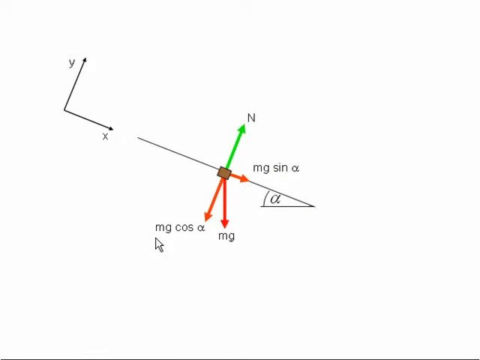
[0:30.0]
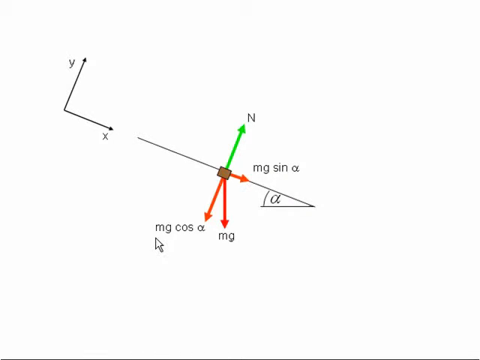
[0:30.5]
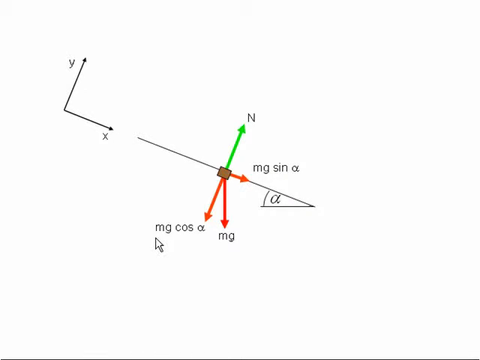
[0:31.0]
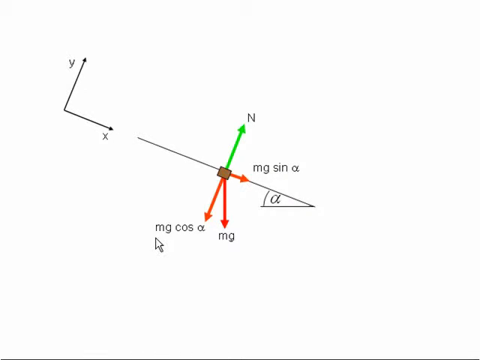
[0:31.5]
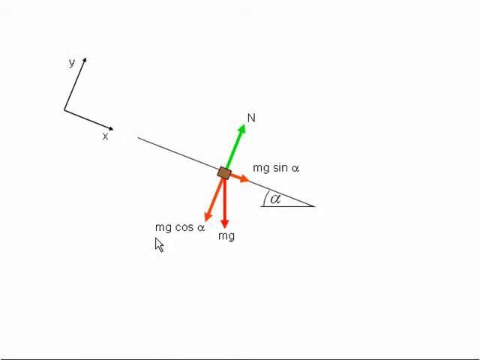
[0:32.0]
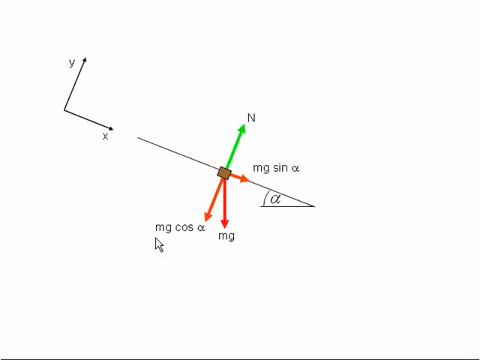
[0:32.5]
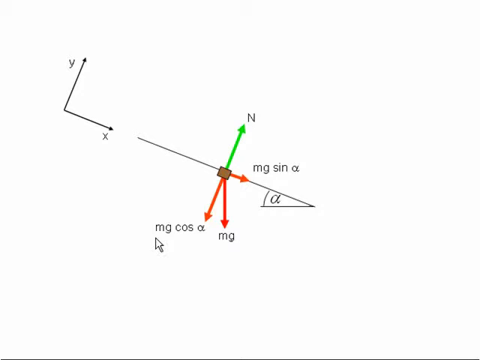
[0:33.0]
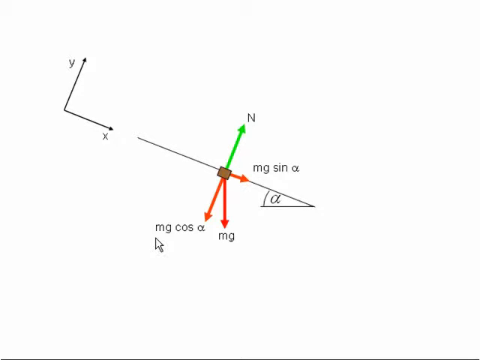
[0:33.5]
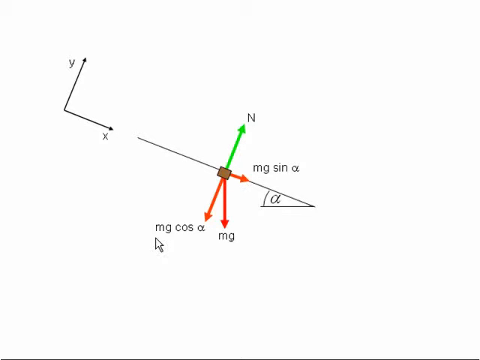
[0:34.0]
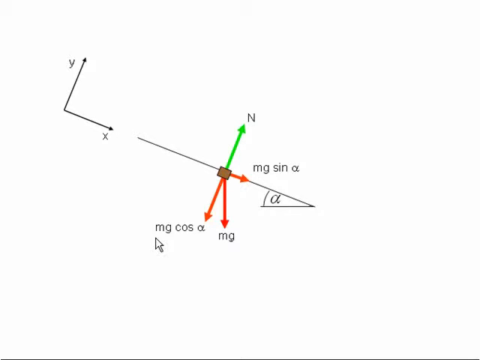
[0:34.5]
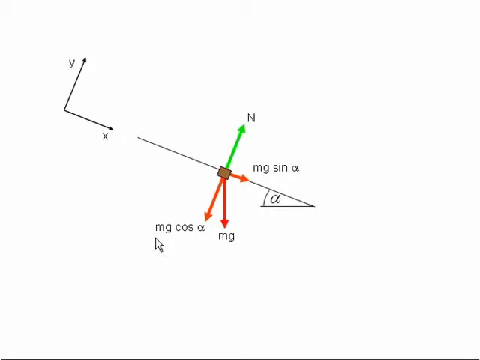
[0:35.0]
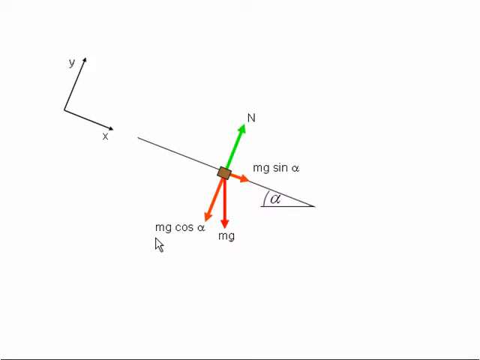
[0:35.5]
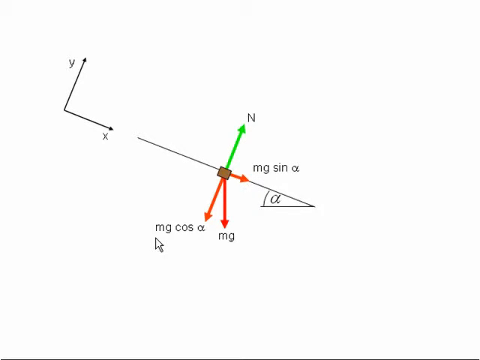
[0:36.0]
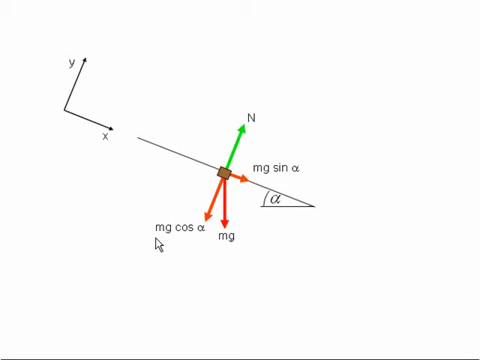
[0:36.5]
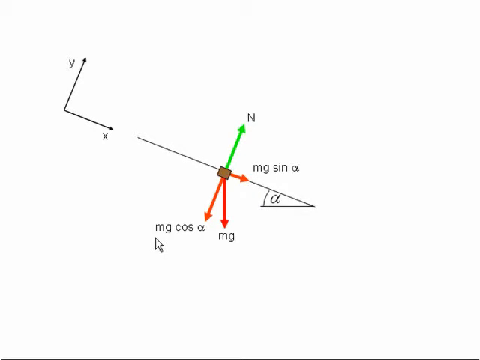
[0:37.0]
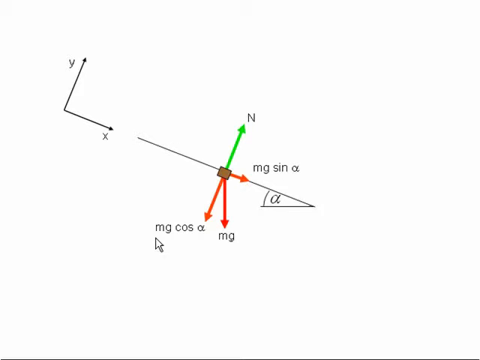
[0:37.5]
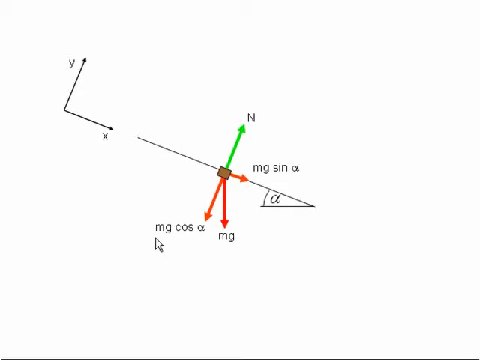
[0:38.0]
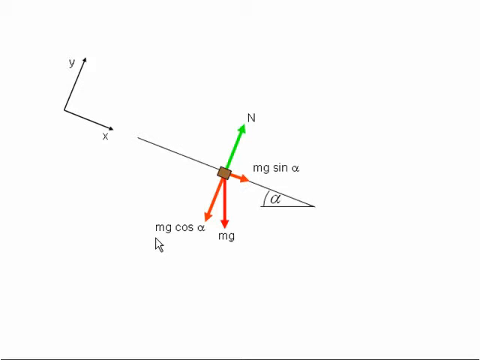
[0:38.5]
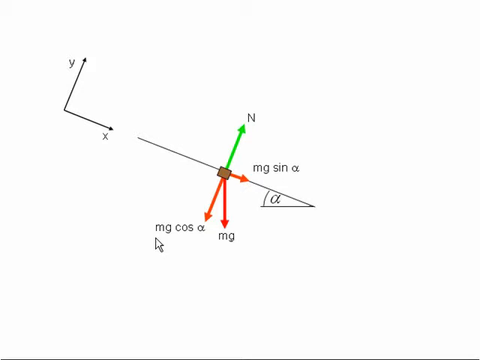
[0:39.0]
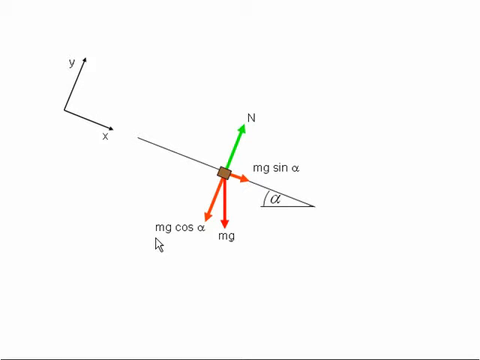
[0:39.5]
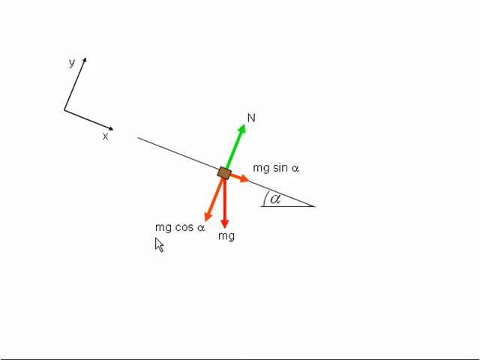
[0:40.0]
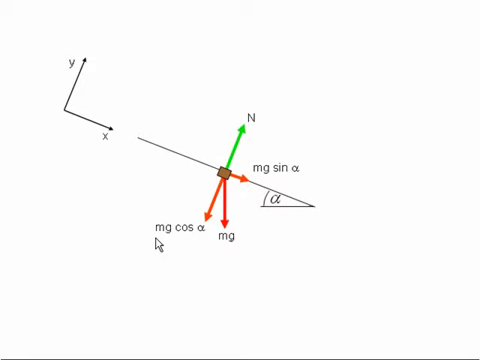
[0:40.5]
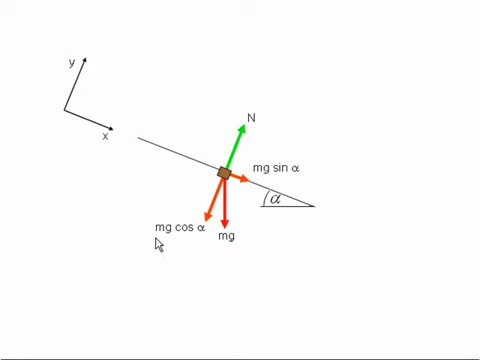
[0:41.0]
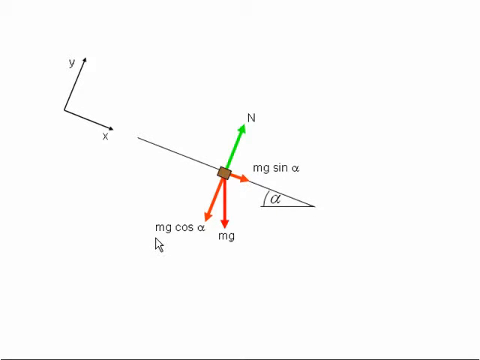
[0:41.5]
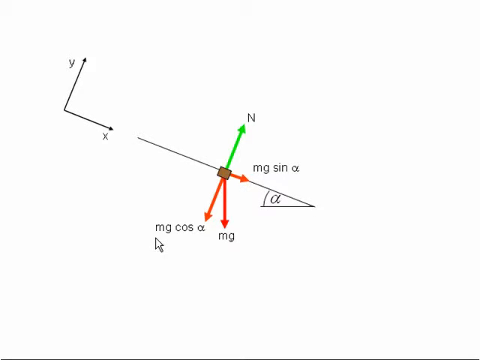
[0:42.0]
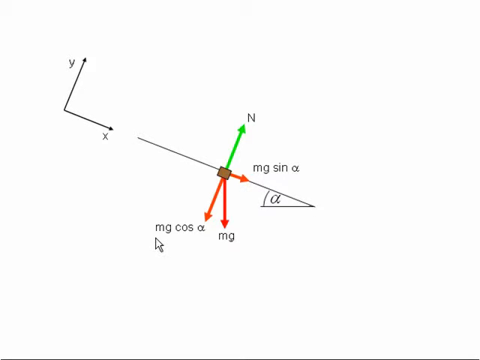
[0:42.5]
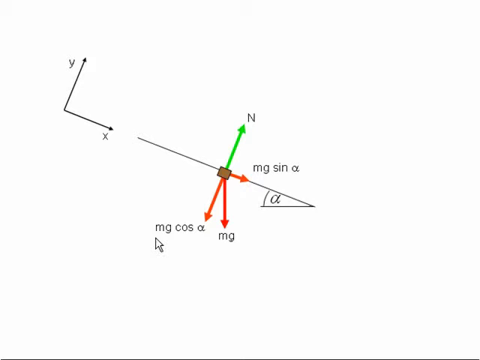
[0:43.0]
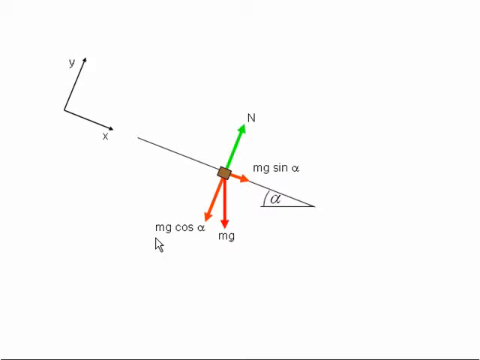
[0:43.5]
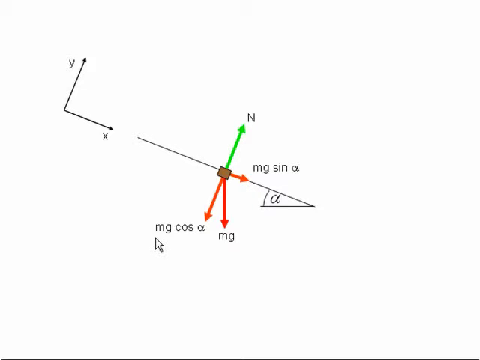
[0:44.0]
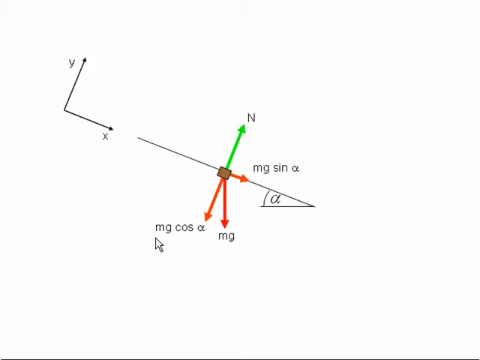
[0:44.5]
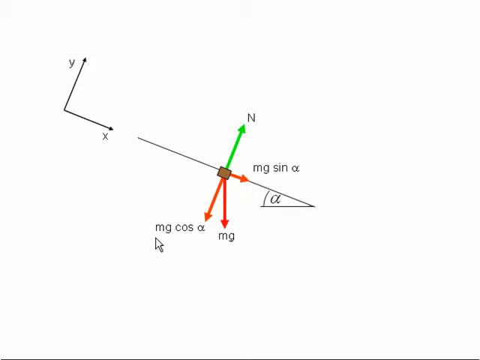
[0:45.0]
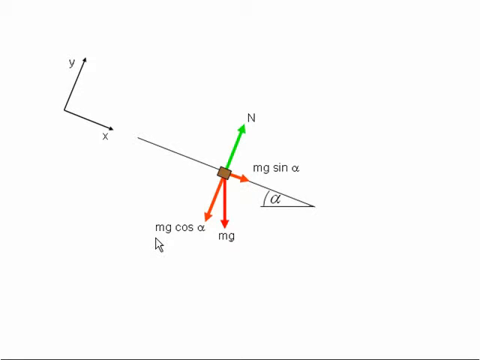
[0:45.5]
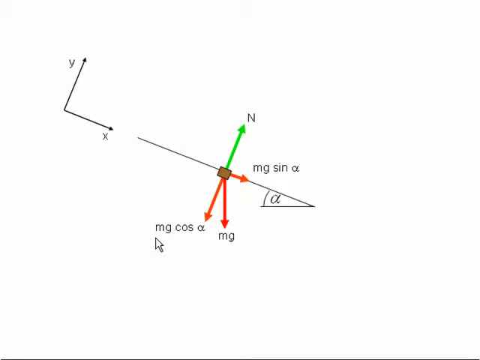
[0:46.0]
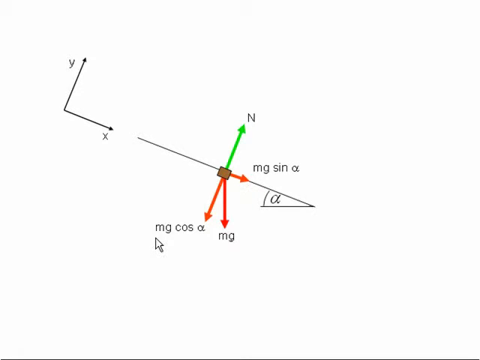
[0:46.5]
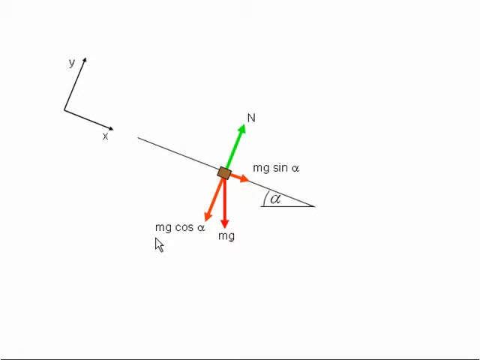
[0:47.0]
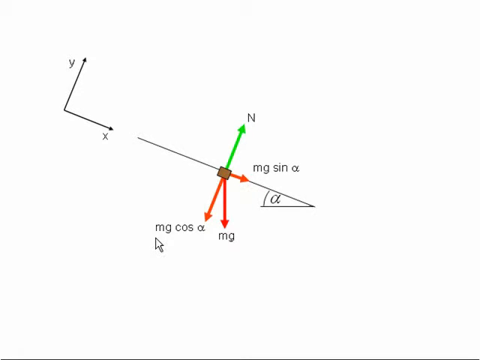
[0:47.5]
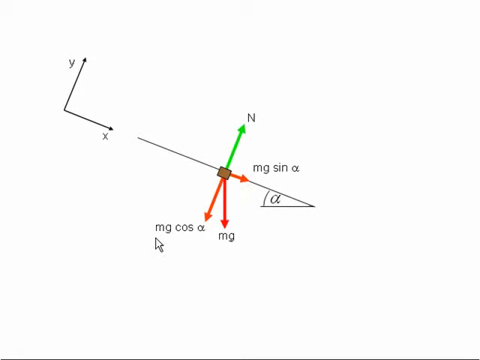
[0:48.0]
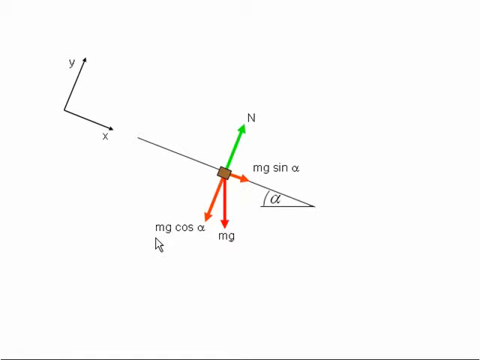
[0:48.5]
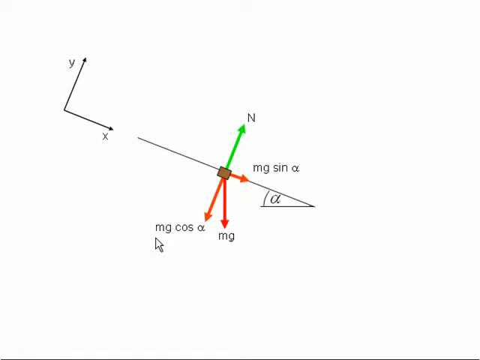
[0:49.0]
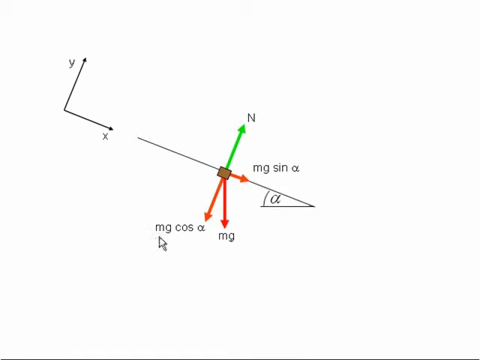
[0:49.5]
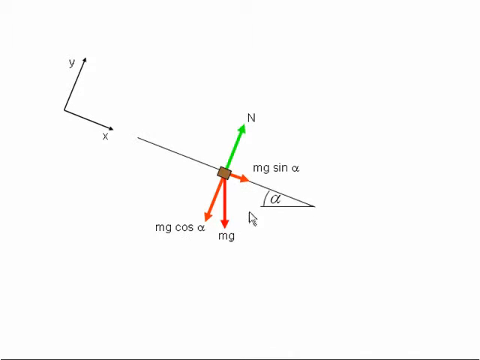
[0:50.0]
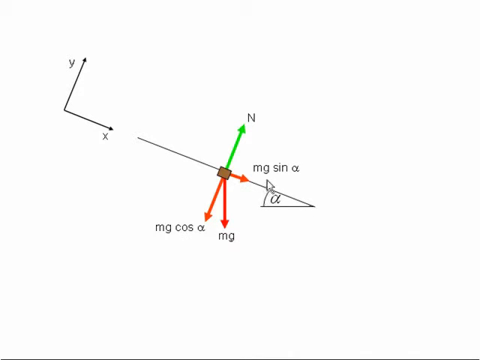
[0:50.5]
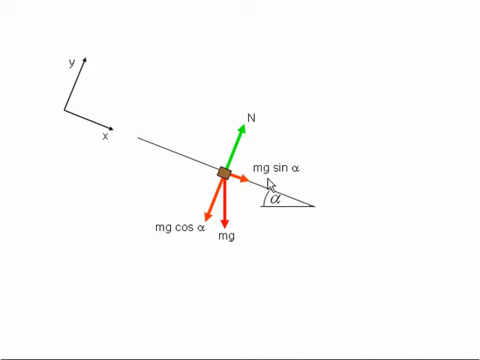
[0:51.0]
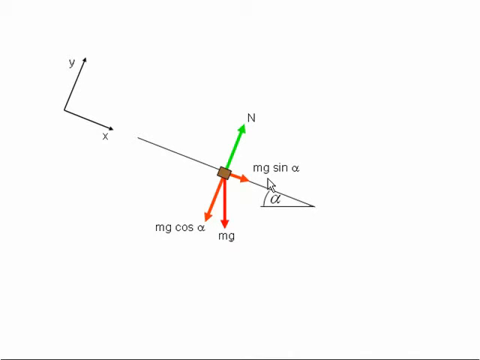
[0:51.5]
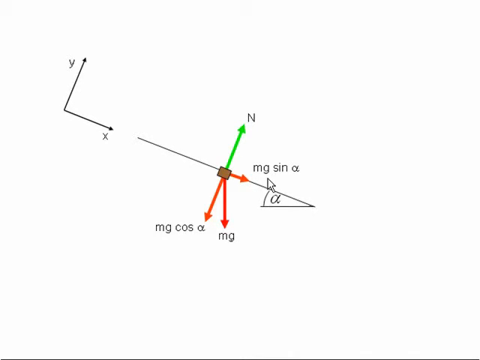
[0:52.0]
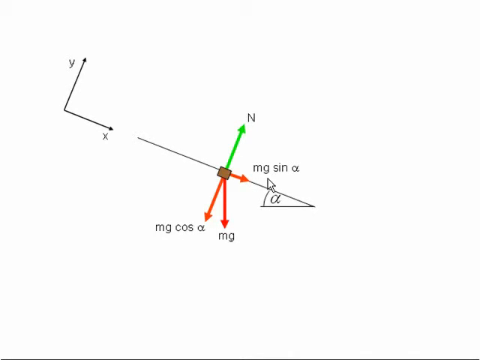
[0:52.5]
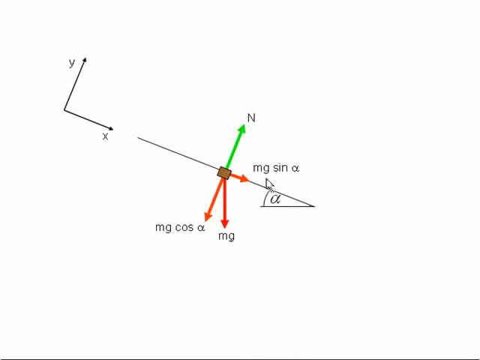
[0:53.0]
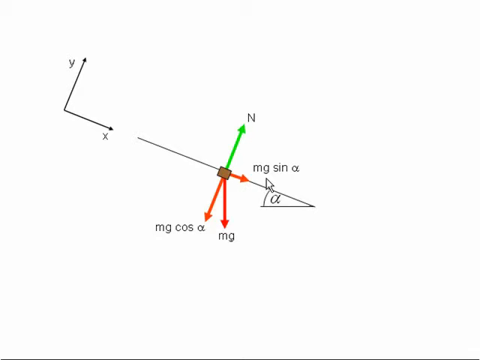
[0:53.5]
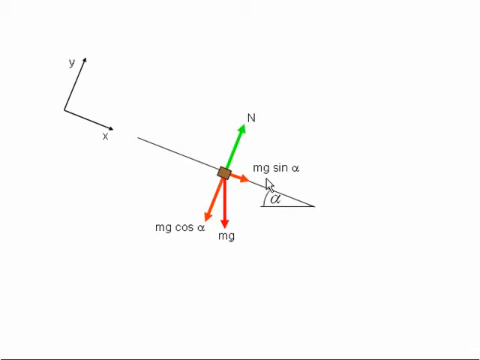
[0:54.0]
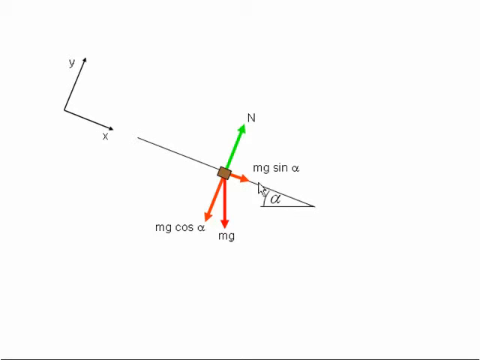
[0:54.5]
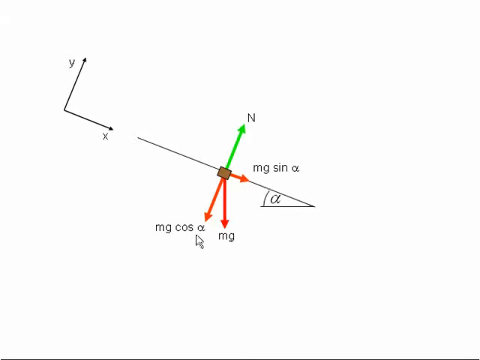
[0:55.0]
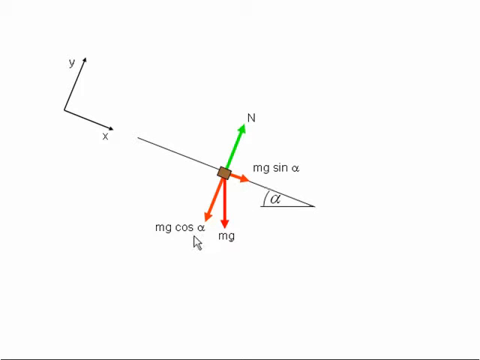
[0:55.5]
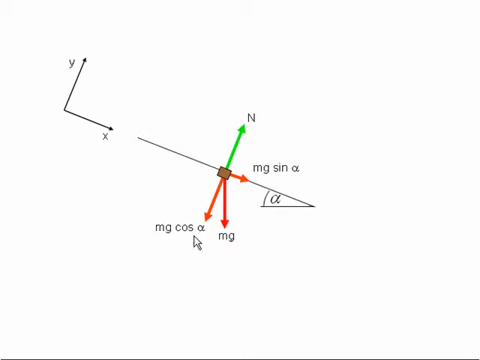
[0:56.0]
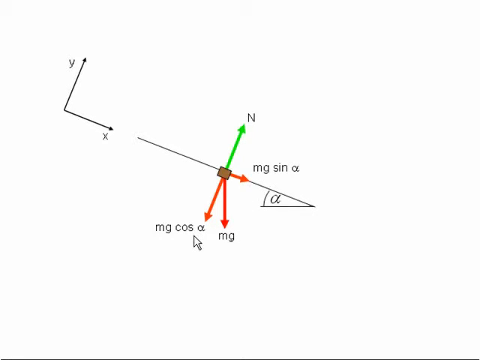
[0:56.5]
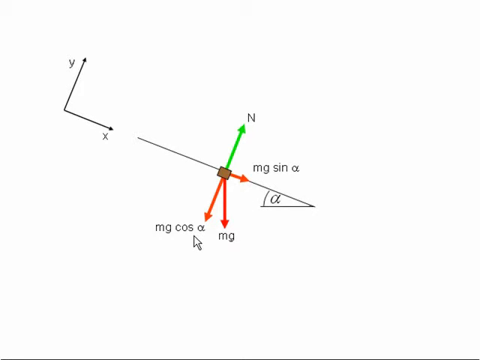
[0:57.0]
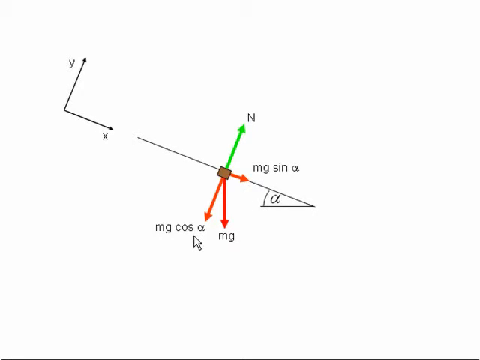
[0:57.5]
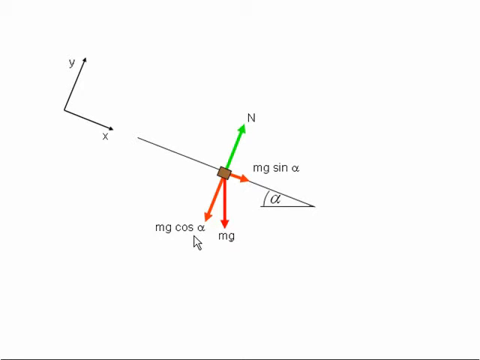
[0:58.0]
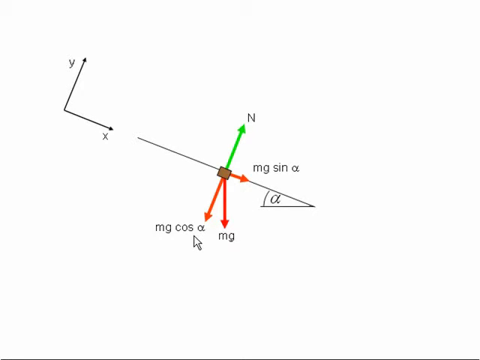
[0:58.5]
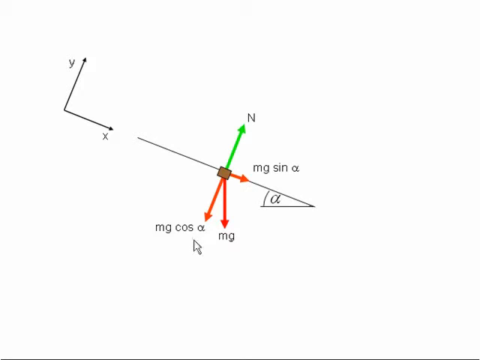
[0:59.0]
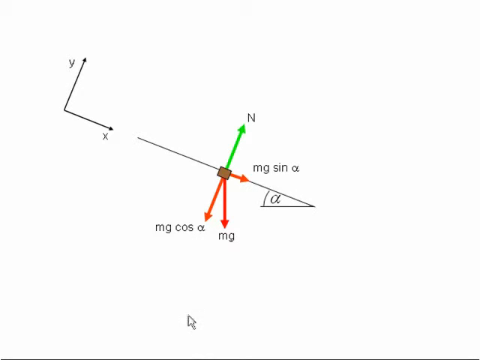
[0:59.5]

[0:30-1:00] The same picture appears, with a coordinate system of Y and X lines and, to its right, the problem diagram. A brick is in the center of a line, and four lines extend from it: a green N line pointing north; a red line, mg sin alpha, going toward the alpha angle; an mg line going south from the brick; and mg cos alpha, also a red line, apparently going south-west. A mouse cursor then points out some of the lines.